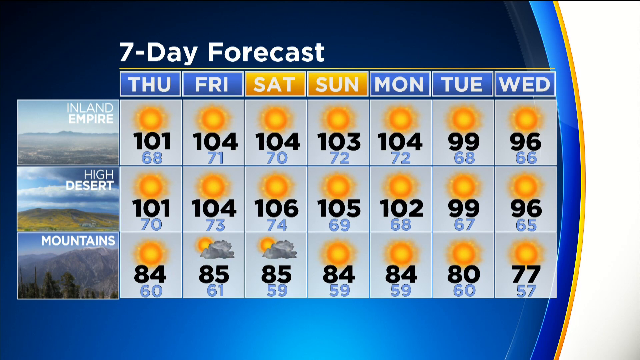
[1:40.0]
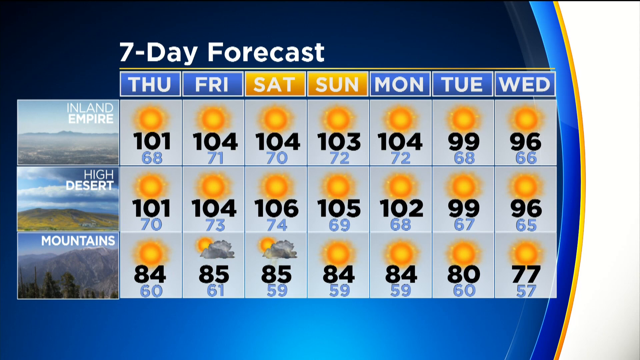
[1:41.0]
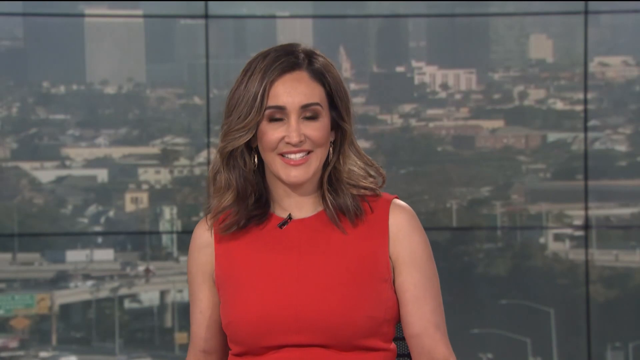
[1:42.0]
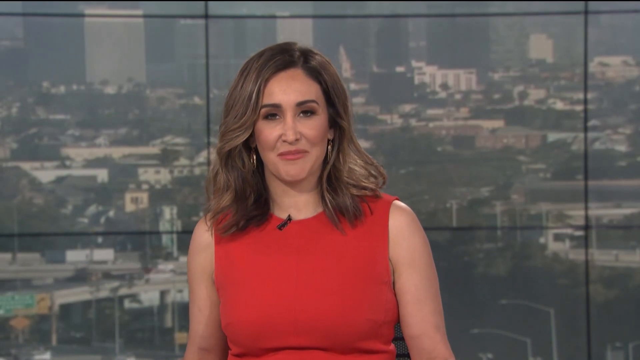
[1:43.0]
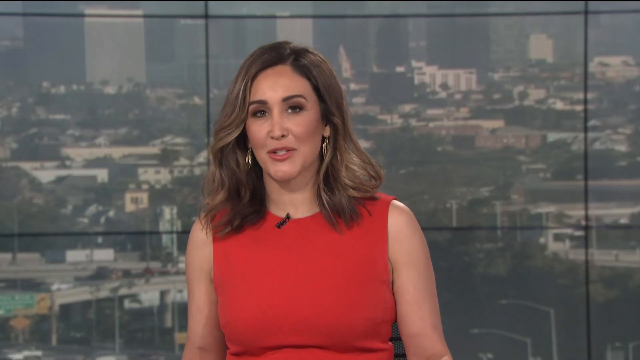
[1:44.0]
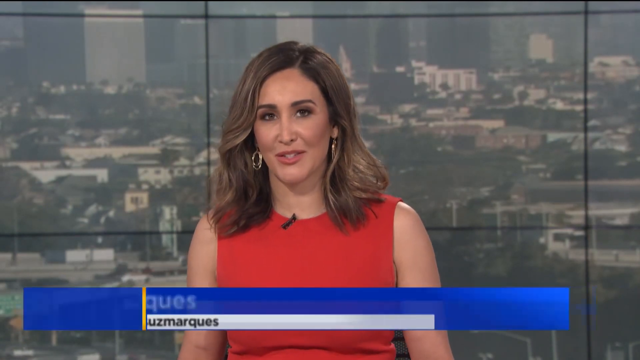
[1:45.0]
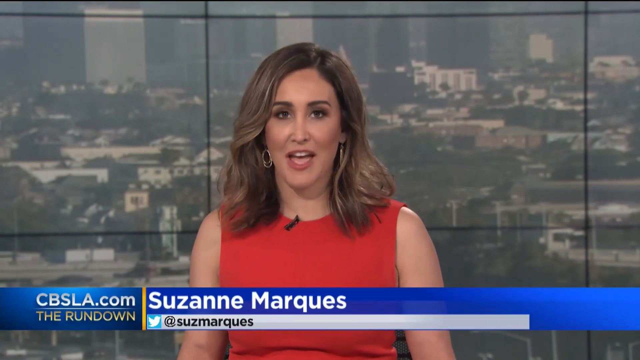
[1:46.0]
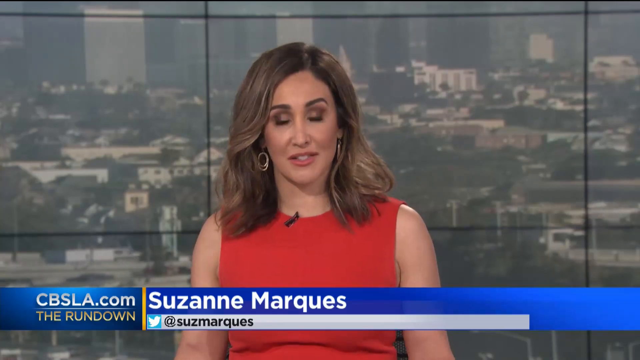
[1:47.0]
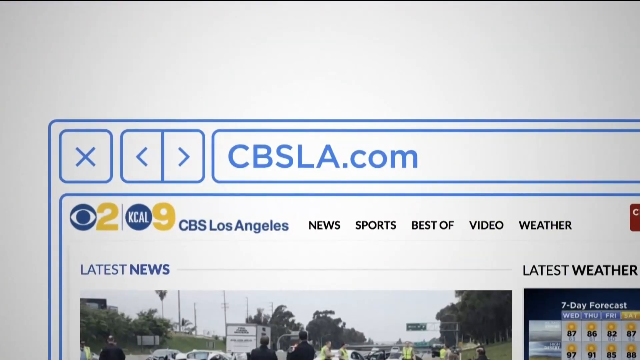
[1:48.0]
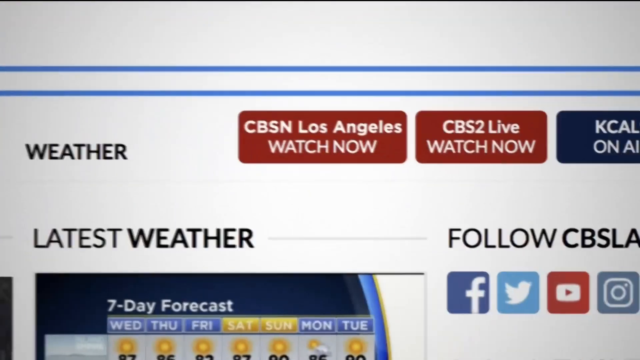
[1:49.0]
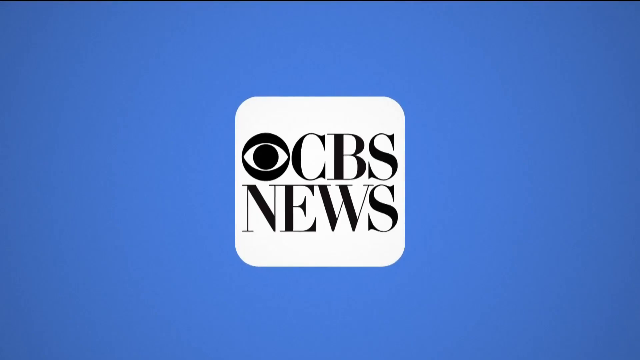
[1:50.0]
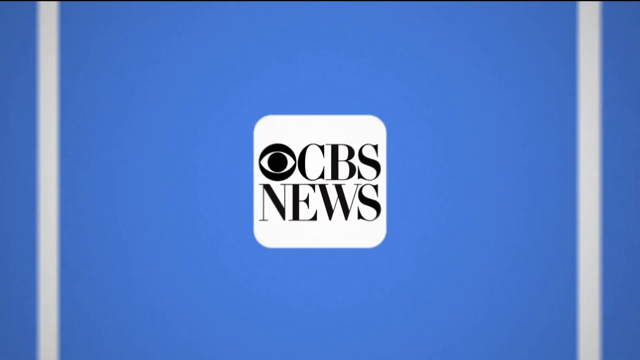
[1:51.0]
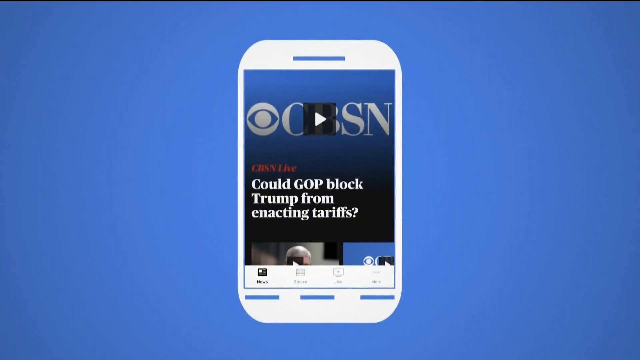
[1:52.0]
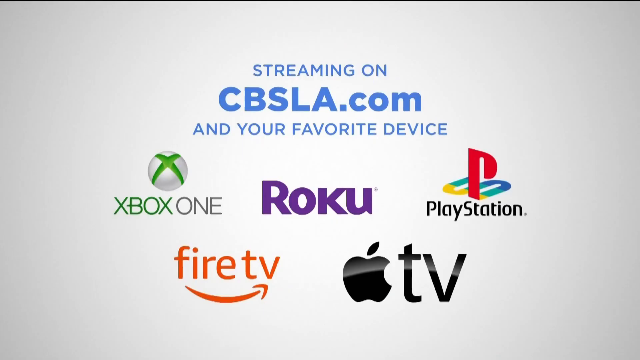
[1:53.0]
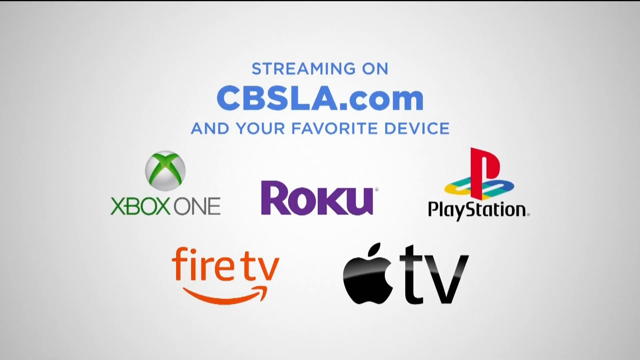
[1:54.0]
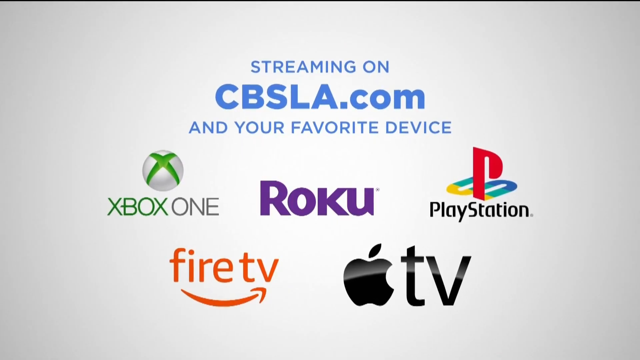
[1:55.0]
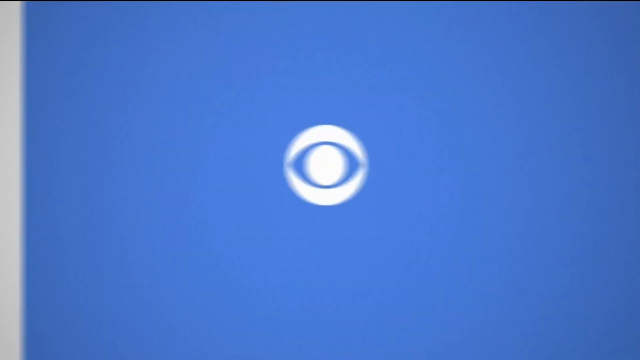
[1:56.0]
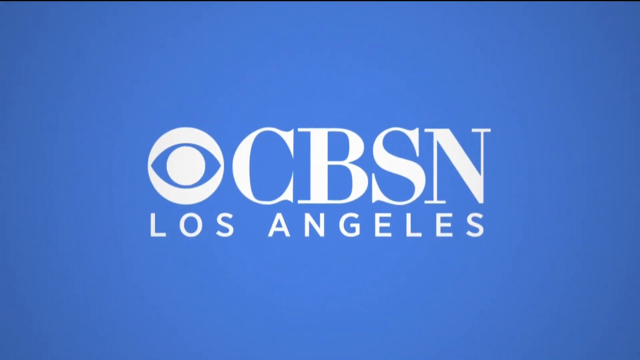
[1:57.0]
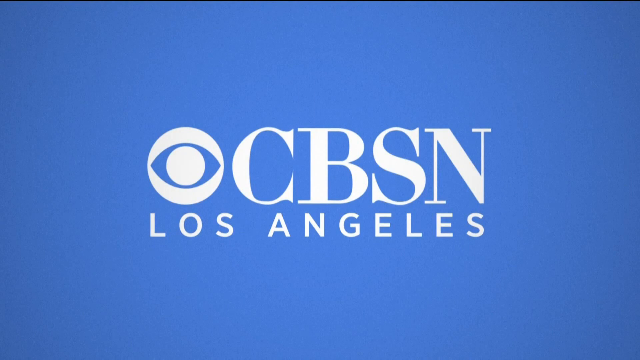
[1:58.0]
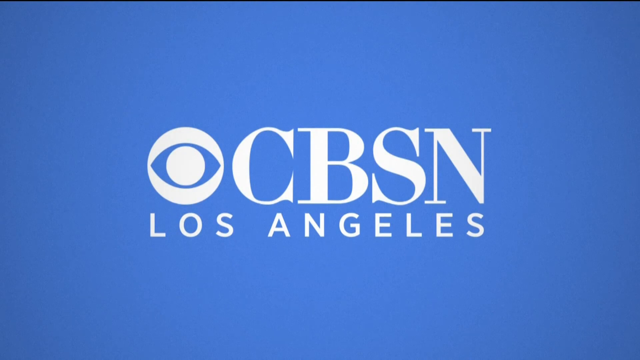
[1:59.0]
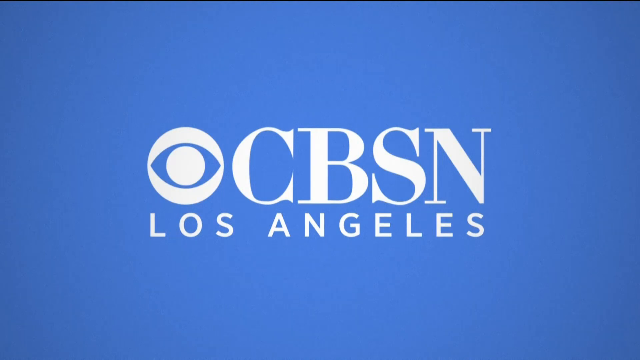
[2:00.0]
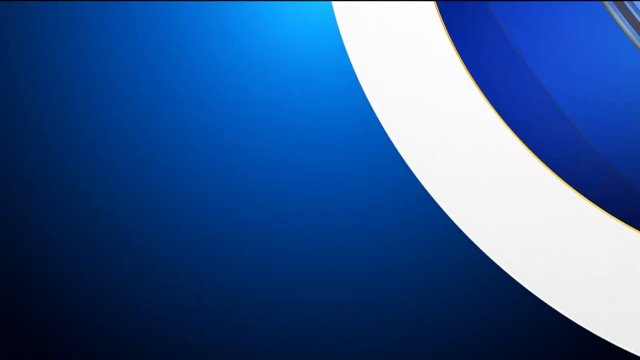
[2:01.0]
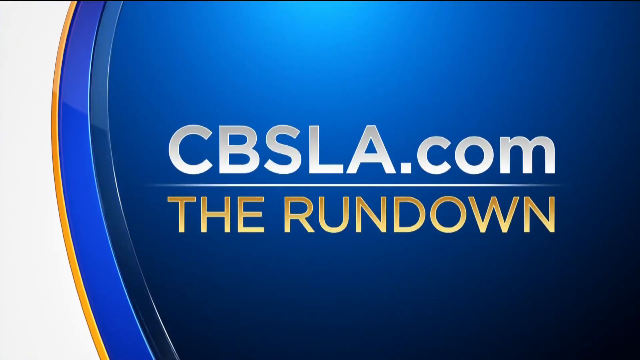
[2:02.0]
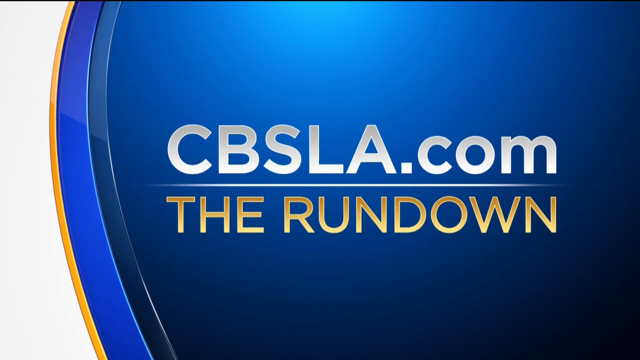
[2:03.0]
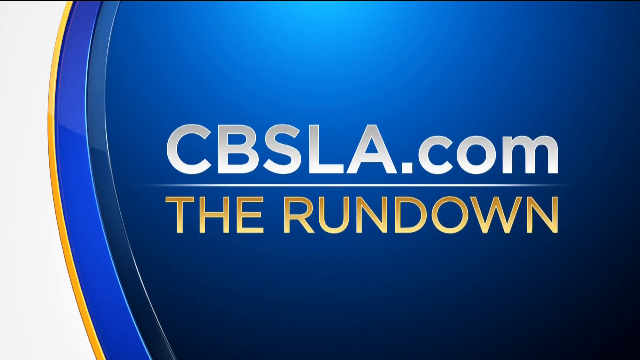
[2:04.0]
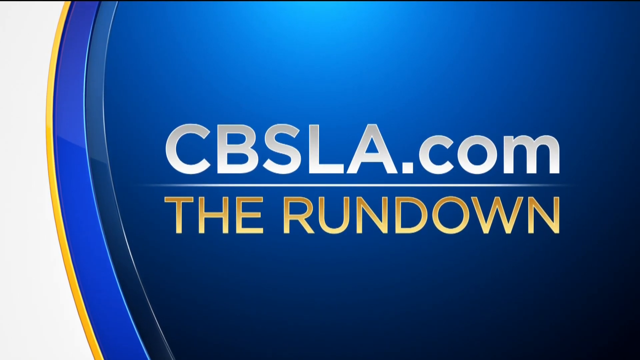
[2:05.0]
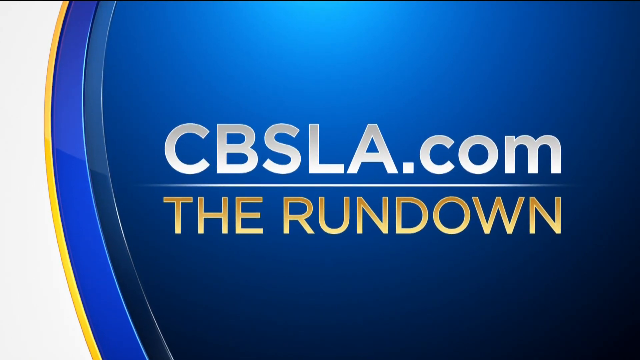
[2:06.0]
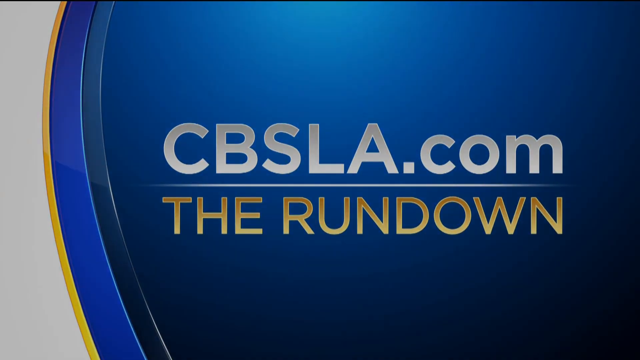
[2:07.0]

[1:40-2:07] She is back broadcasting, showing streaming options for CBSN in Los Angeles, with different categories and apps. The CBSLA website, CBSLA Los Angeles, is shown, and a phone displays a headline about the GOP blocking Trump from enacting tariffs, among many headlines. The screen shows that CBSLA.com can be streamed on Xbox One, Roku TV, PlayStation, Fire TV and April TV.